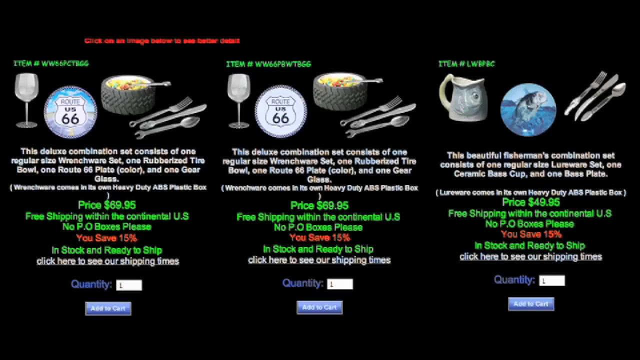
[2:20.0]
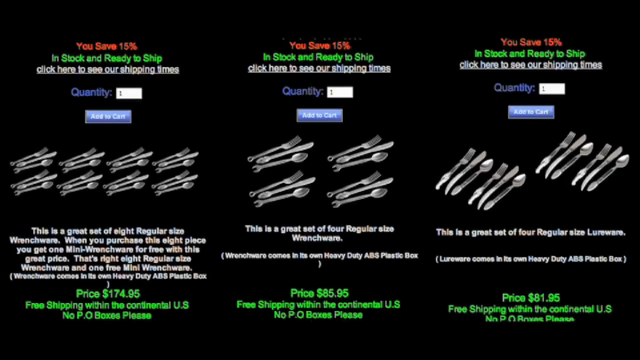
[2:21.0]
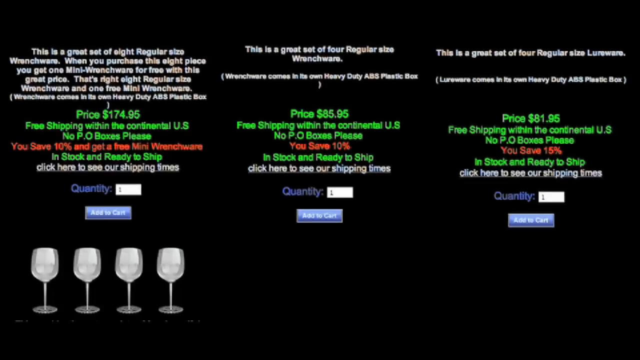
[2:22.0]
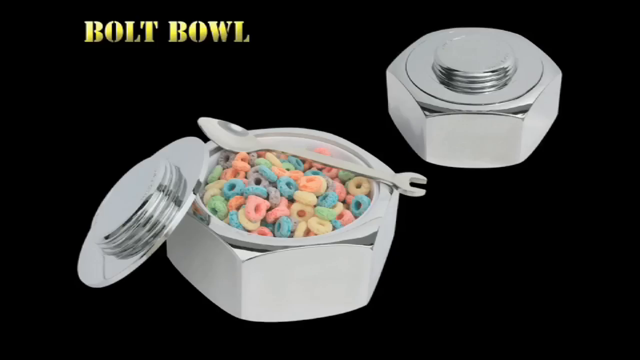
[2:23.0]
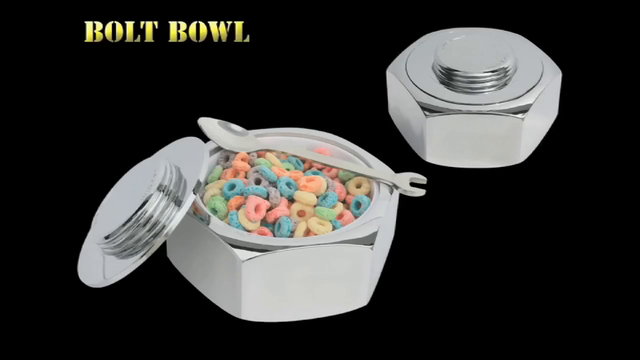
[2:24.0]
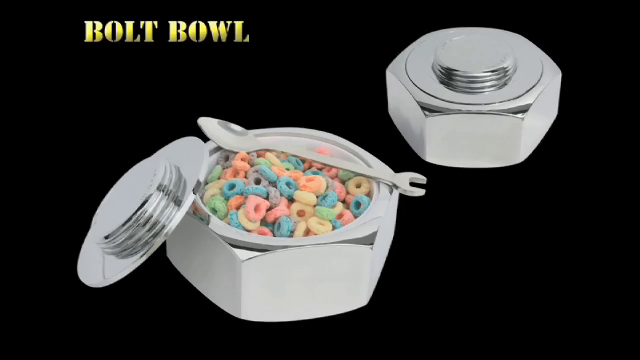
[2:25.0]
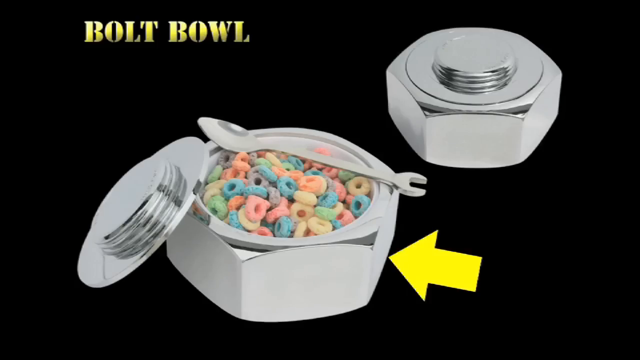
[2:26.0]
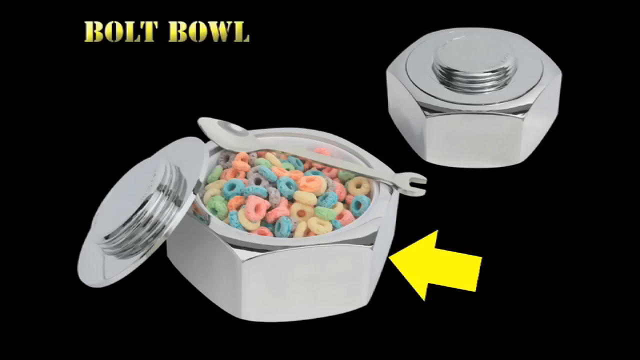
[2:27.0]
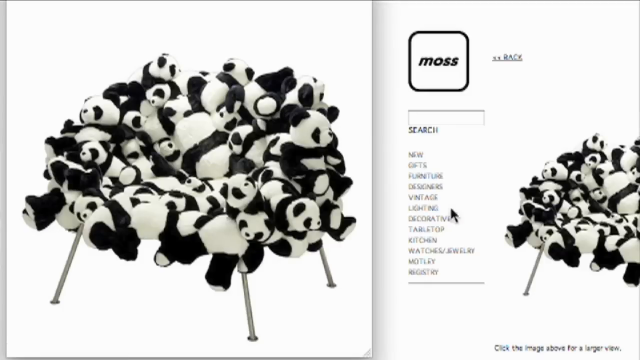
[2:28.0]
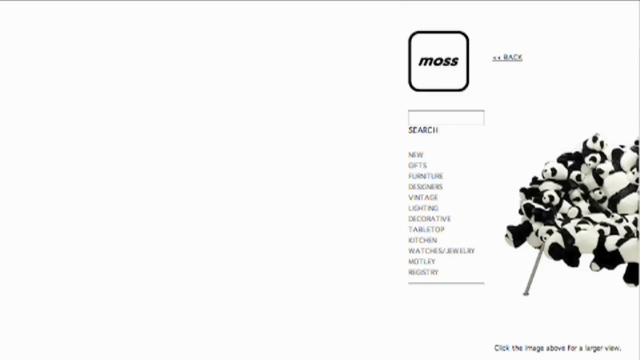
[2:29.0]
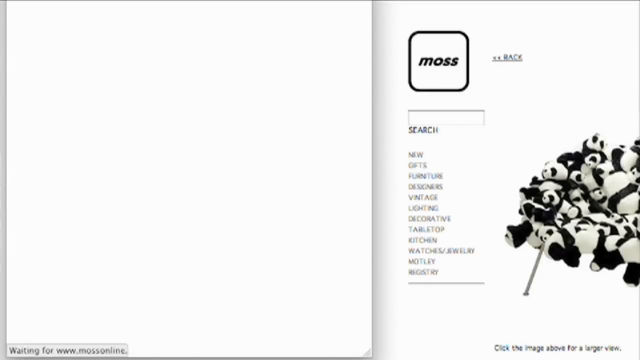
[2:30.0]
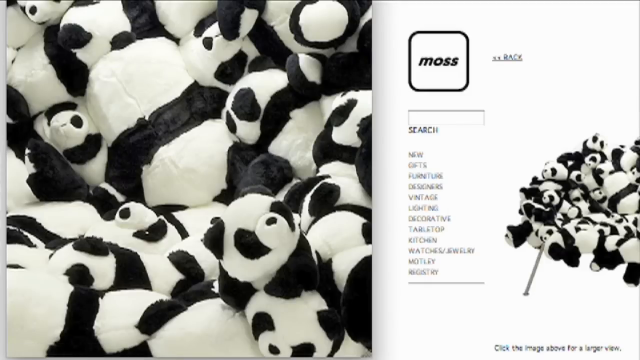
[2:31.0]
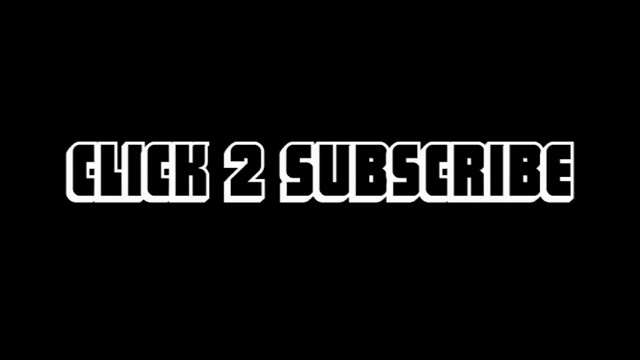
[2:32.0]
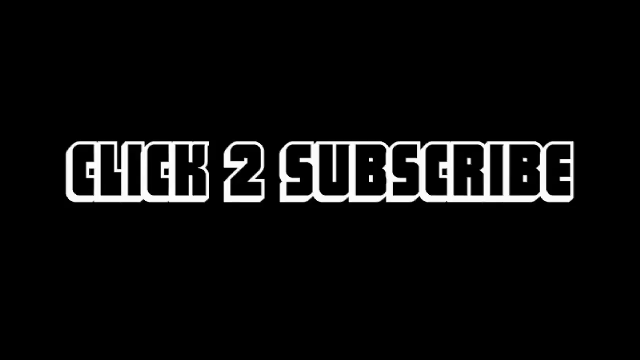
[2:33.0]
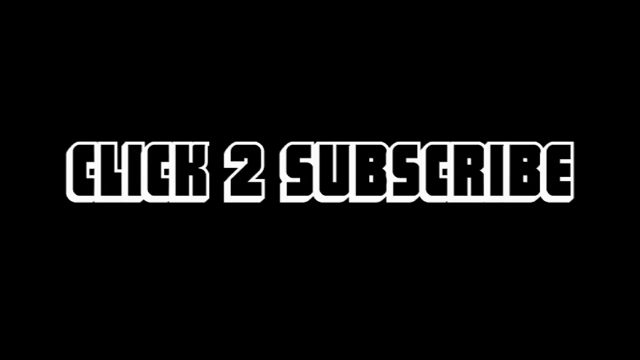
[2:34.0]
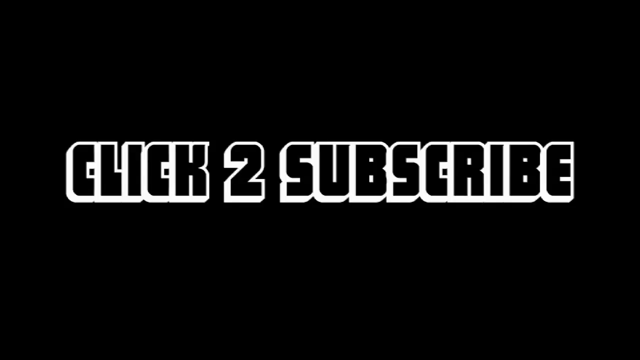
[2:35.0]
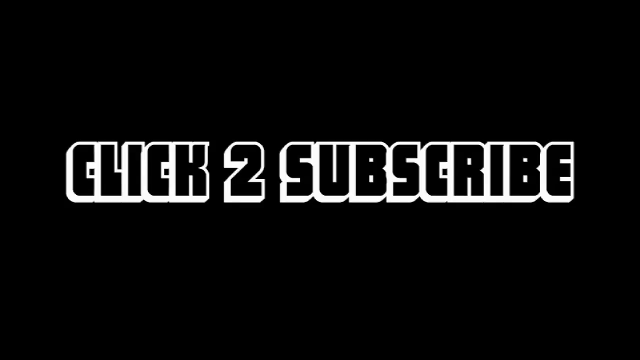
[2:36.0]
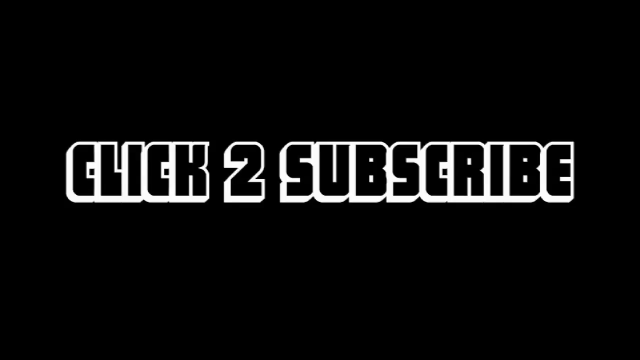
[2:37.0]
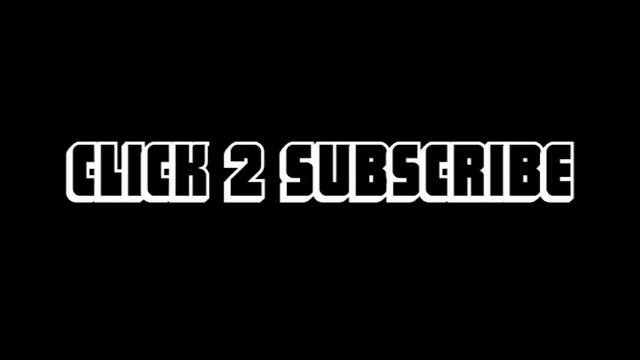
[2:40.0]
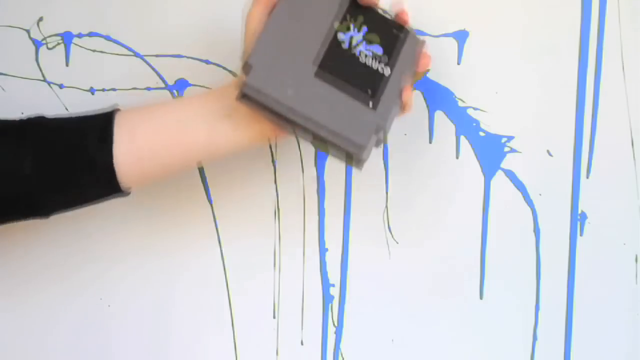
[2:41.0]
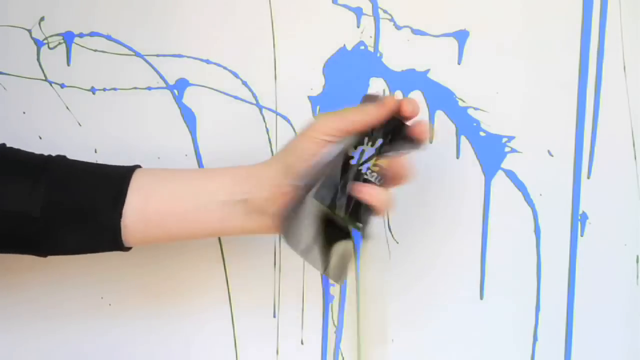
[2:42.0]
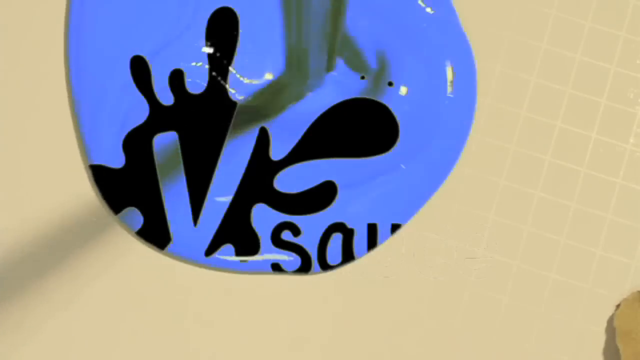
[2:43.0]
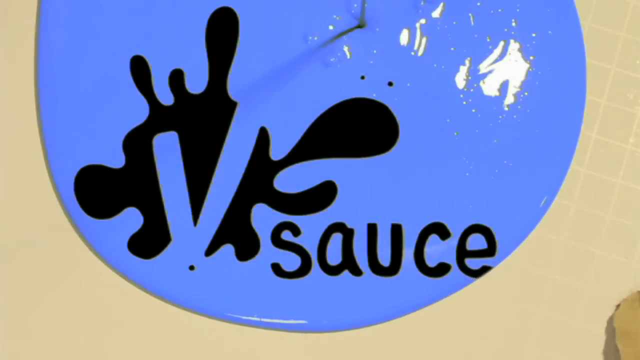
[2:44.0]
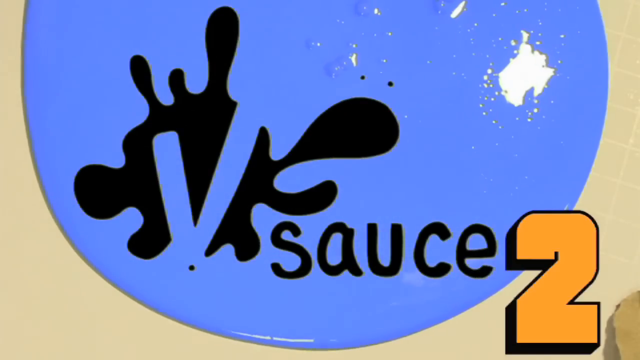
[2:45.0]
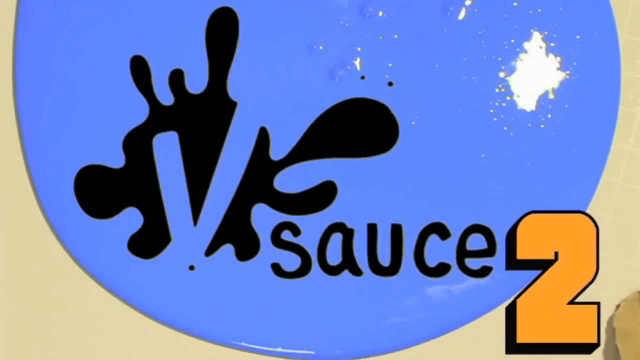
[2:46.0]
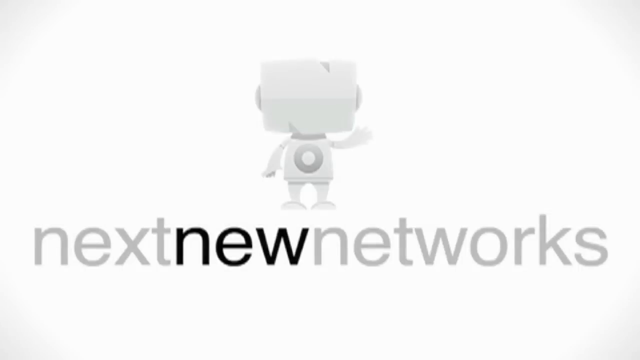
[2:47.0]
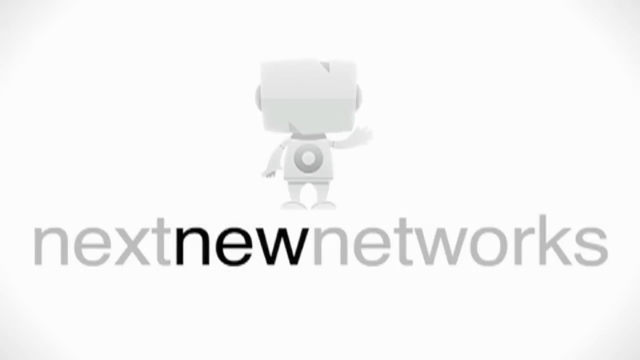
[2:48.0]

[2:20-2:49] What seems to be a graphic shows a whole bunch of forks and spoons that are actually wrenches, along with a tire and a wine glass, with a lot of text in white, green and red underneath. The video cuts to what kind of looks like a nut and bolt, but is actually a bolt filled with cereal in many different colors that kind of looks like Fruit Loops, with a yellow arrow pointing at it. Next, a whole bunch of pandas look clustered together. Black letters with a white border read "click to subscribe". Finally, a person's hand holds an old Nintendo cartridge, with a white wall behind it that has blue and orange paint scattered on it.